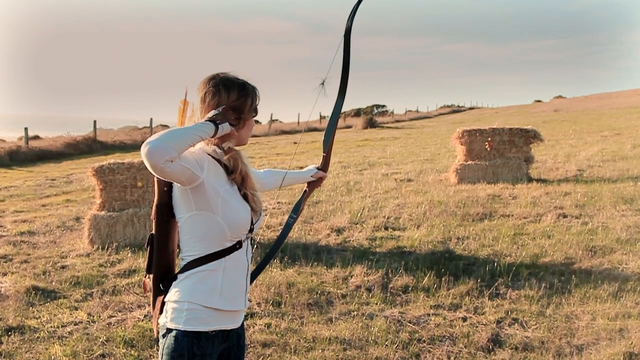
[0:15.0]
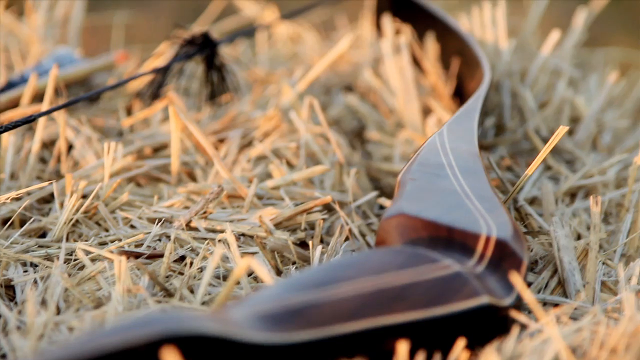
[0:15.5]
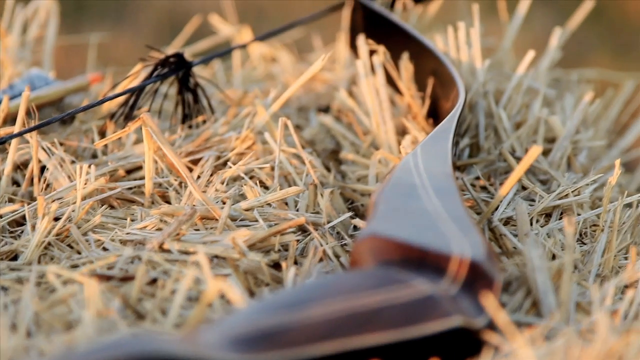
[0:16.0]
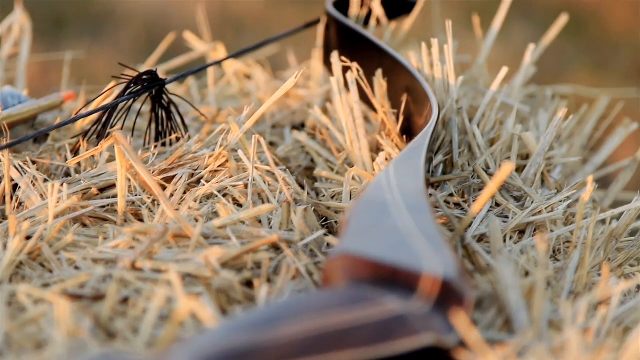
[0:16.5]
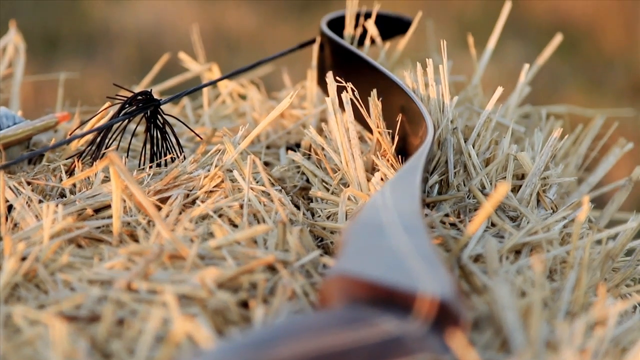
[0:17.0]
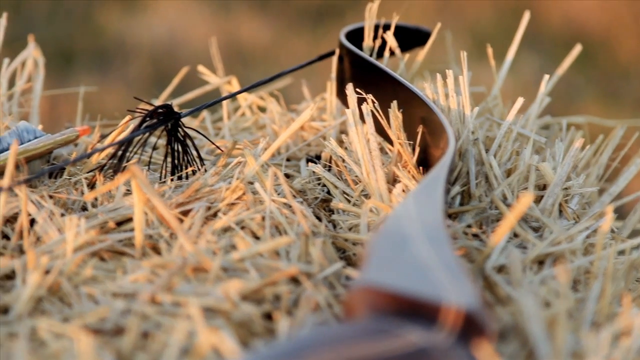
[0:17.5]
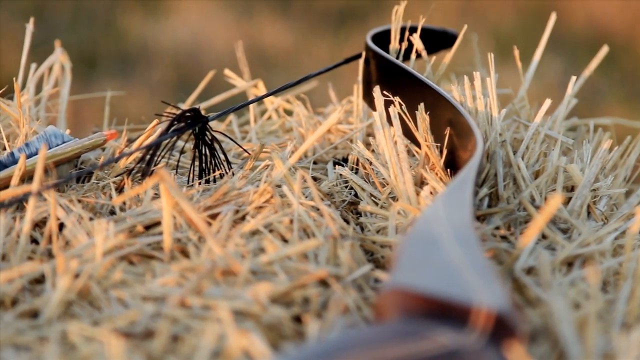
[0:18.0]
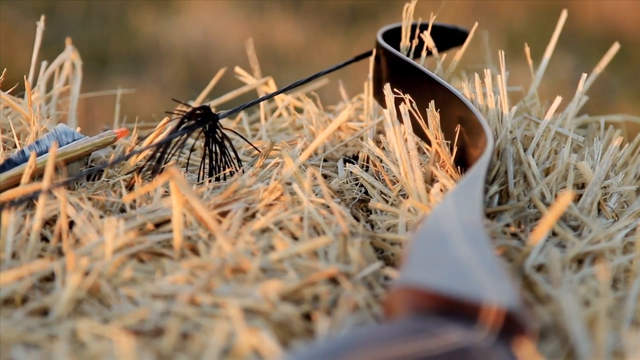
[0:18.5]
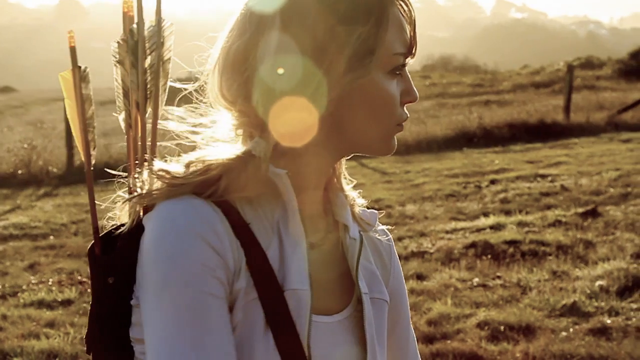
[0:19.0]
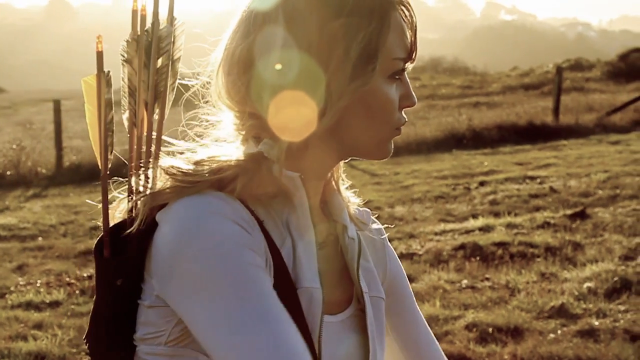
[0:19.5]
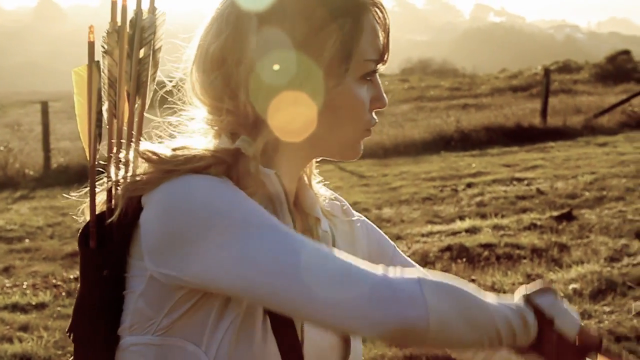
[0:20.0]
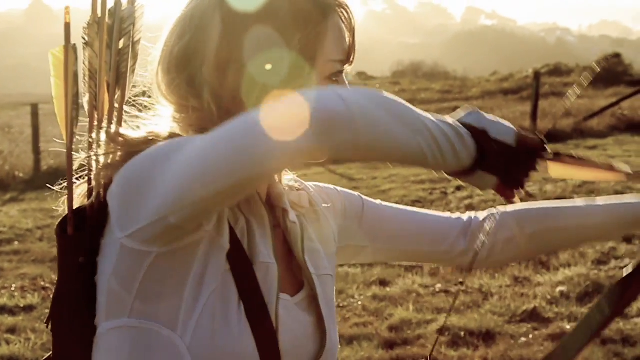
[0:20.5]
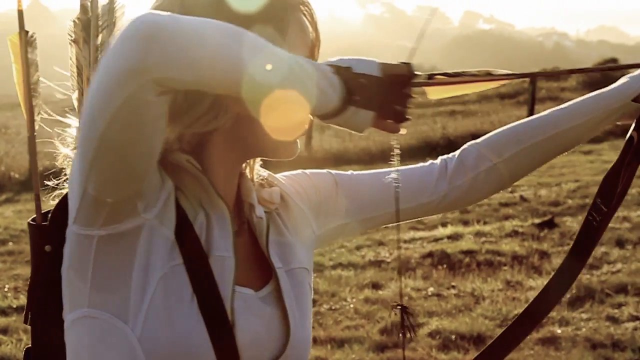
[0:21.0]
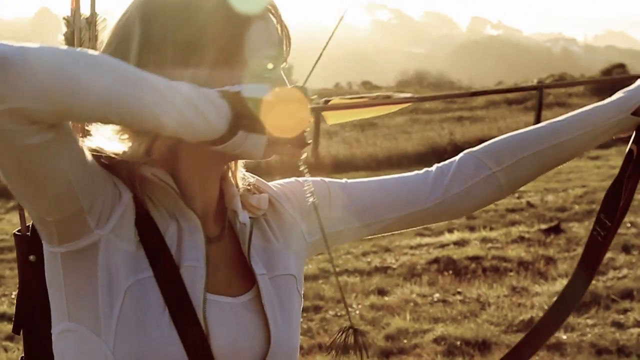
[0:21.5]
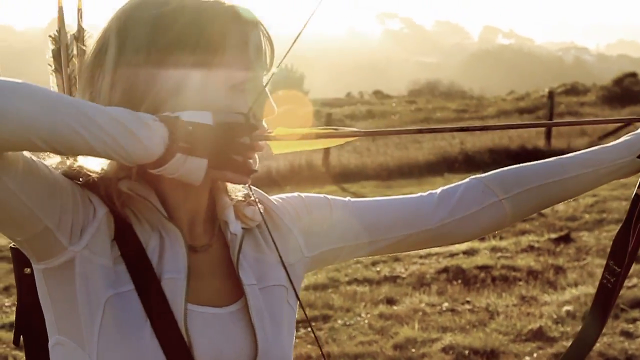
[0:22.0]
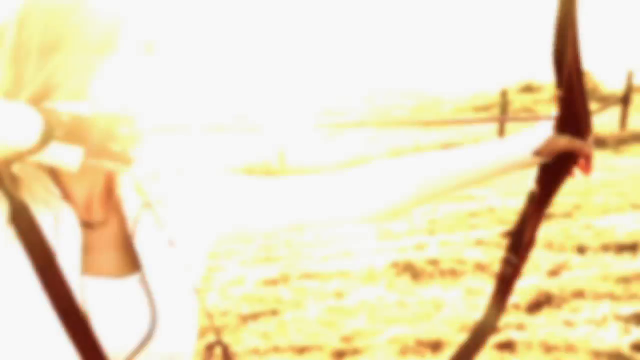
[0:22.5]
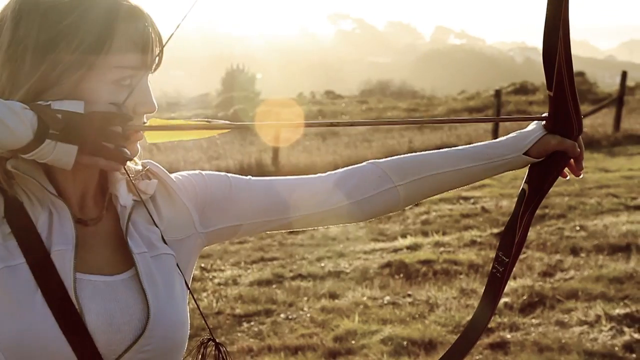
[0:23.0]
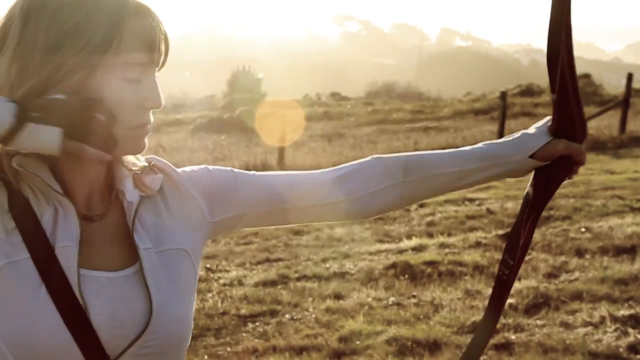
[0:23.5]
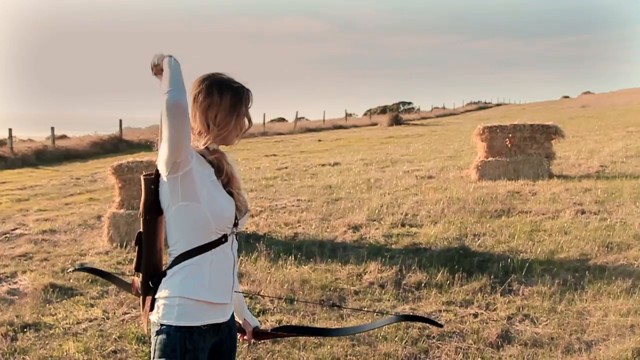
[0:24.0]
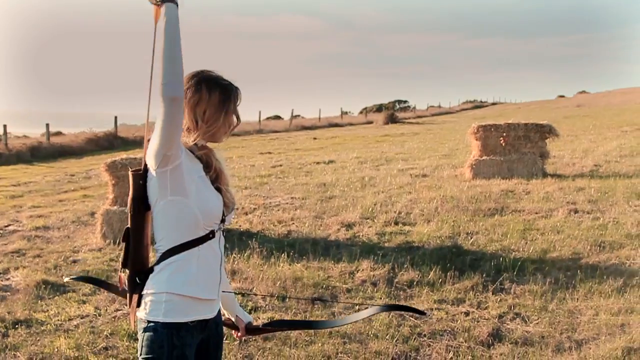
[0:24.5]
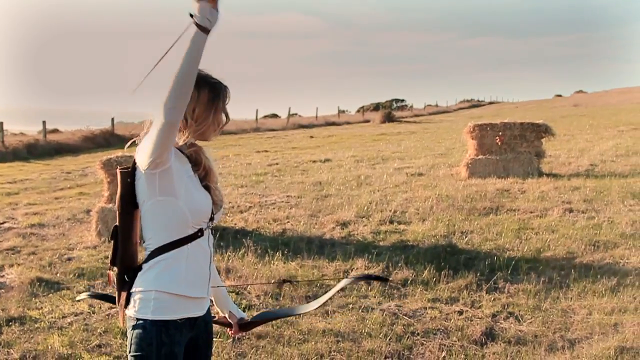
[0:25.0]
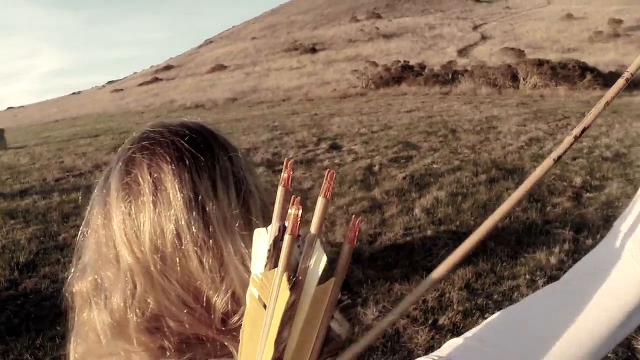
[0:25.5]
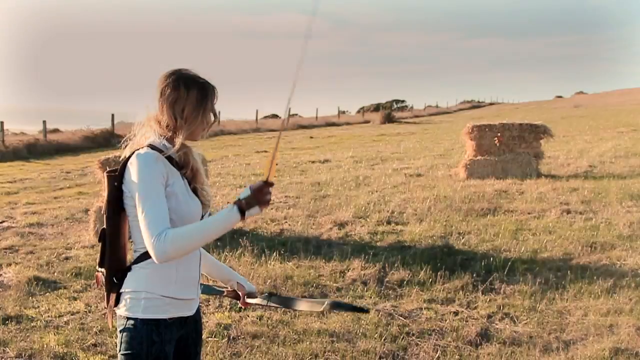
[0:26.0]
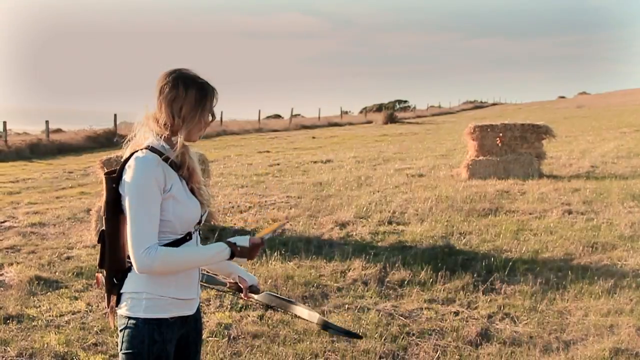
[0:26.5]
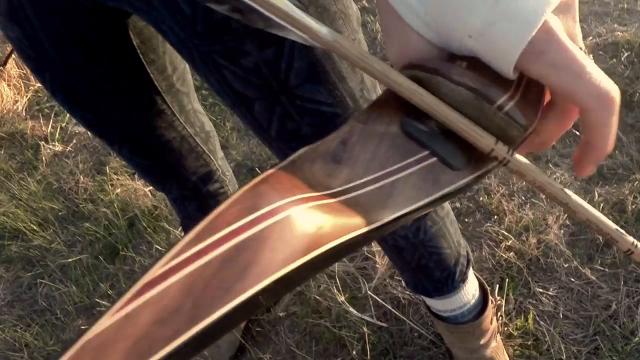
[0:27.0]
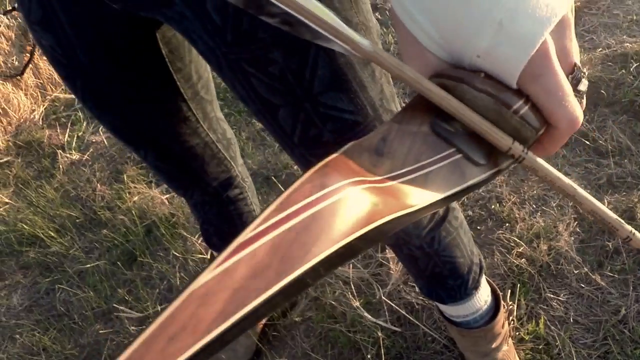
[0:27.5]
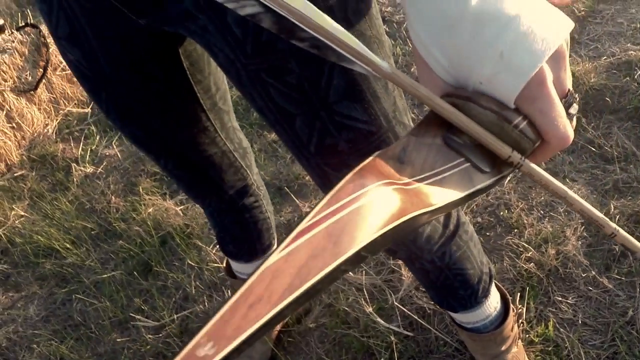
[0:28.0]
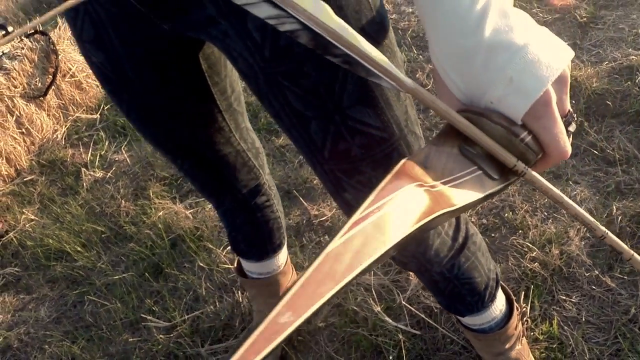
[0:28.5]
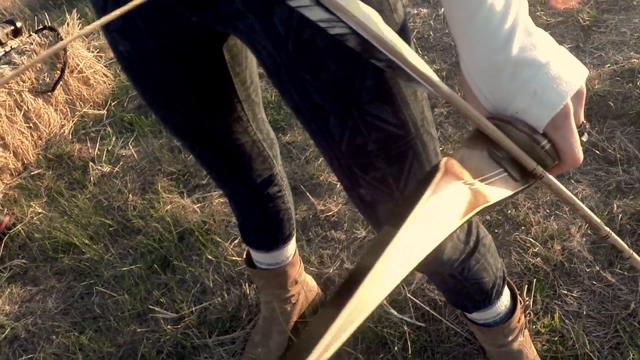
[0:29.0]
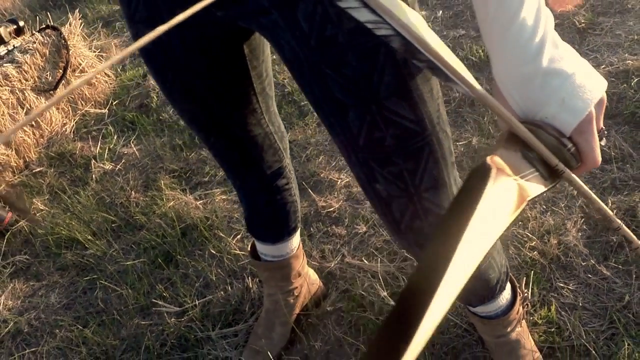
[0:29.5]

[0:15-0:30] The girl in all white stands on a bunch of hay with her arms reached out holding a bow, having just fired at a bale of hay. What looks like a belt or some kind of leather material lies on hay on the ground while the camera moves slowly to show its details. The girl in white then brings the arrow back up toward her face, getting ready to fire into a bale of hay. The video flashes at certain points, and the image becomes overexposed at times. After another flash, a piece of leather material is shown that she holds somewhat near the arrow, with some kind of string attached to it that has some fluff. The girl has about six or seven bows in her backpack.